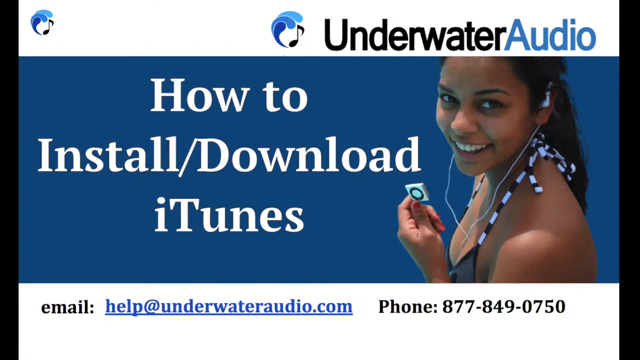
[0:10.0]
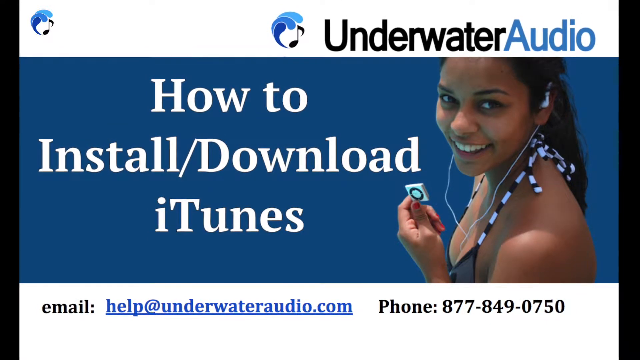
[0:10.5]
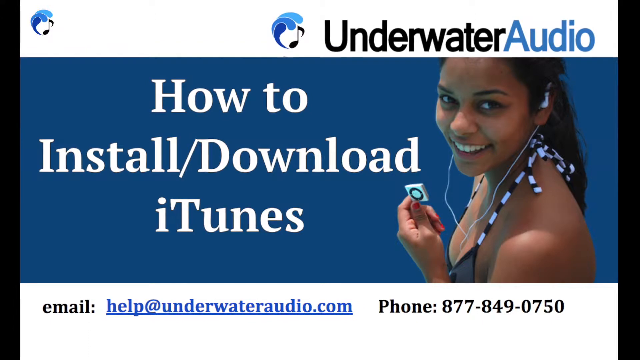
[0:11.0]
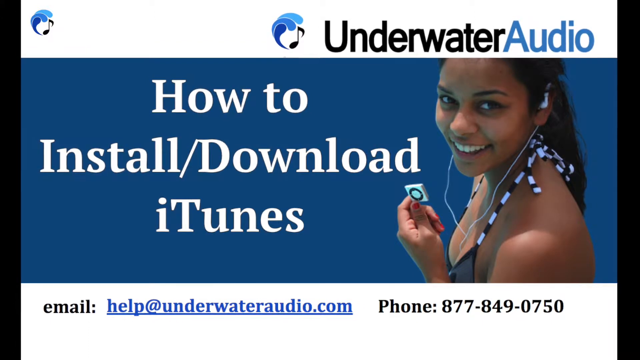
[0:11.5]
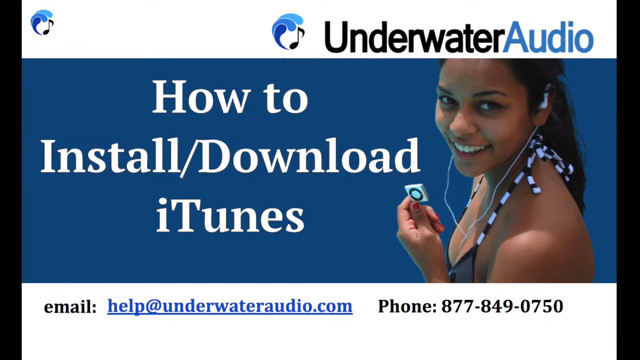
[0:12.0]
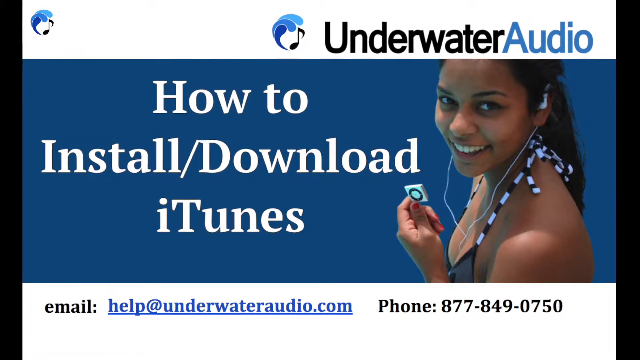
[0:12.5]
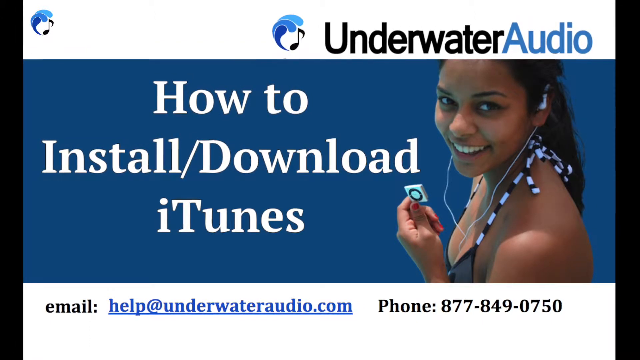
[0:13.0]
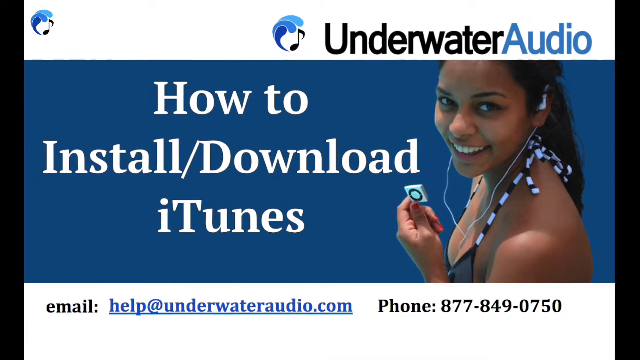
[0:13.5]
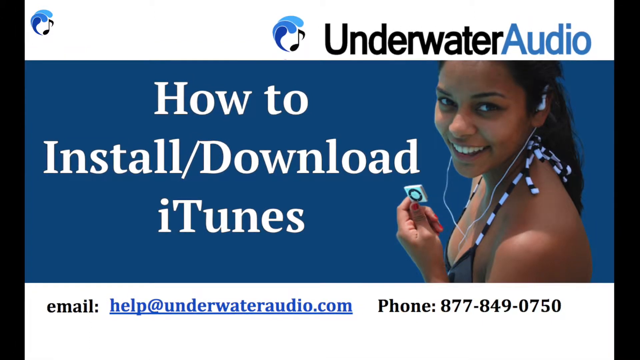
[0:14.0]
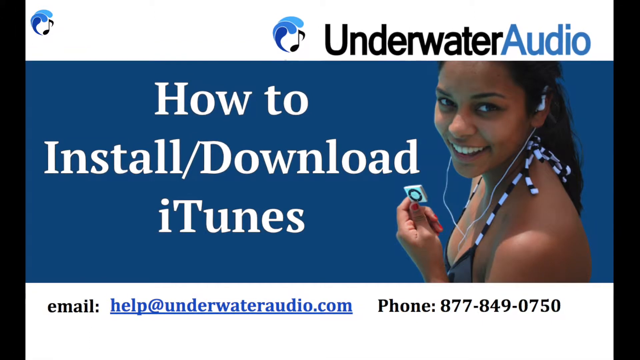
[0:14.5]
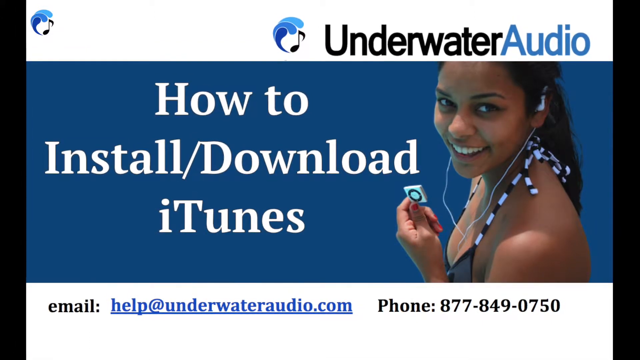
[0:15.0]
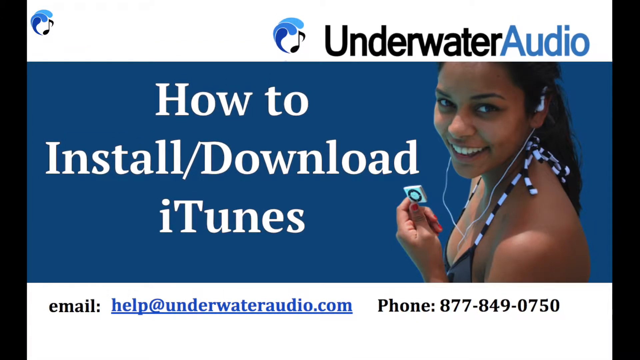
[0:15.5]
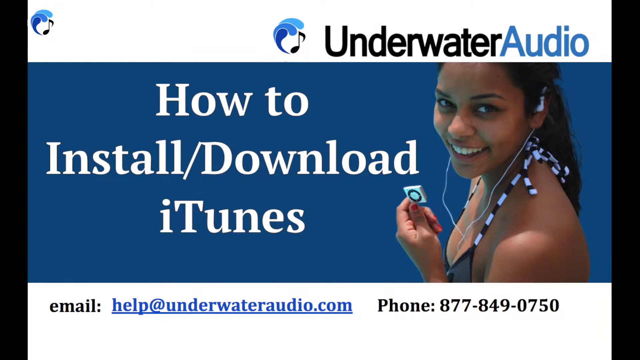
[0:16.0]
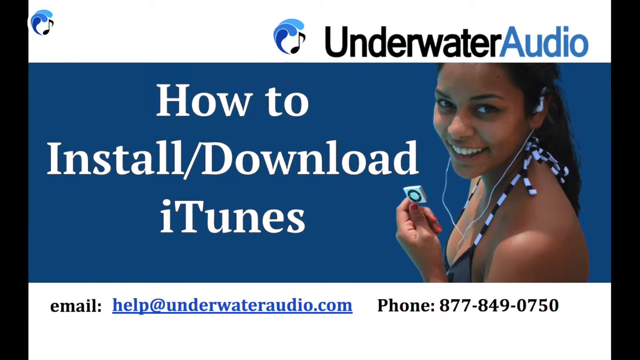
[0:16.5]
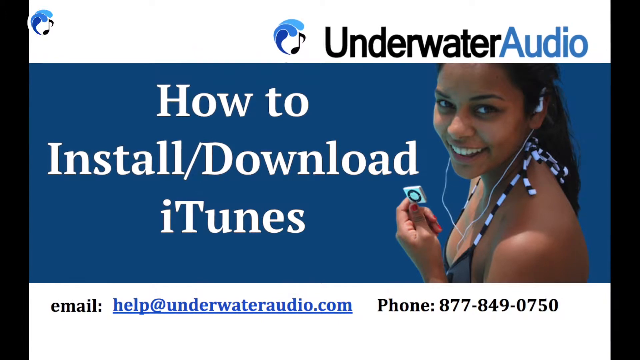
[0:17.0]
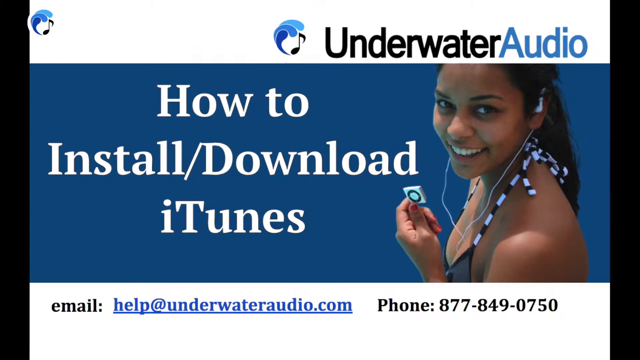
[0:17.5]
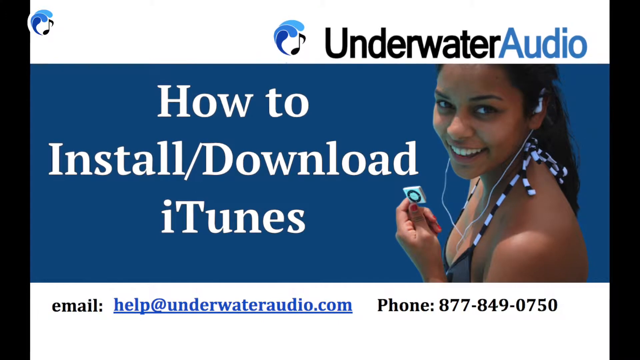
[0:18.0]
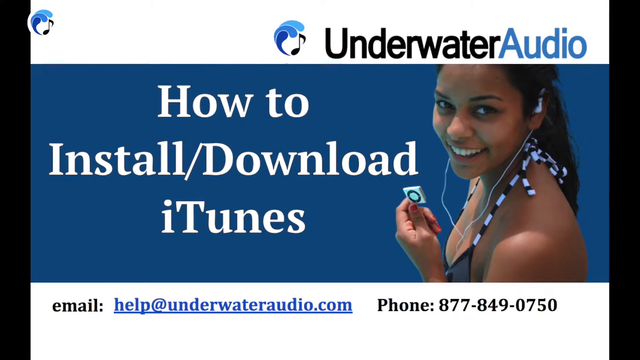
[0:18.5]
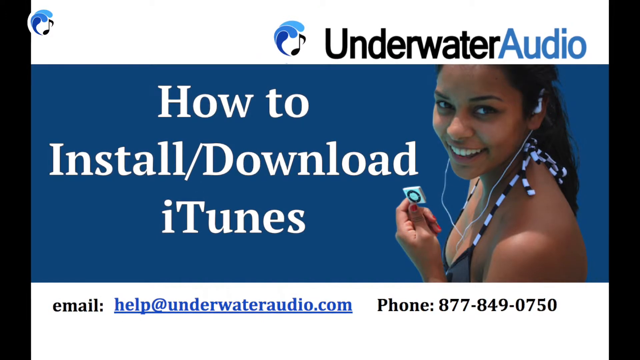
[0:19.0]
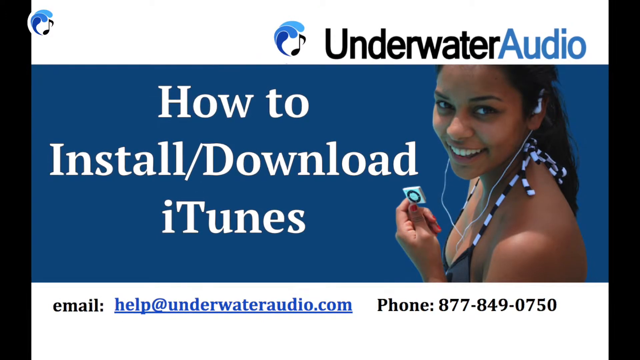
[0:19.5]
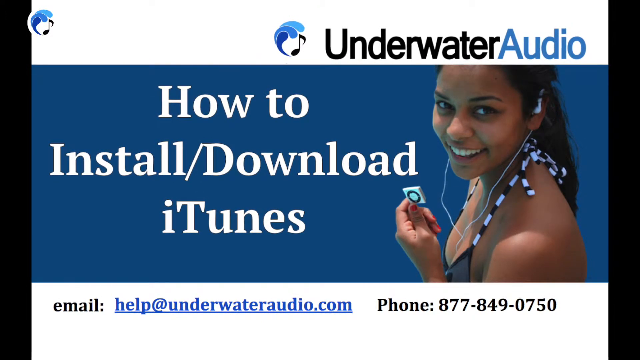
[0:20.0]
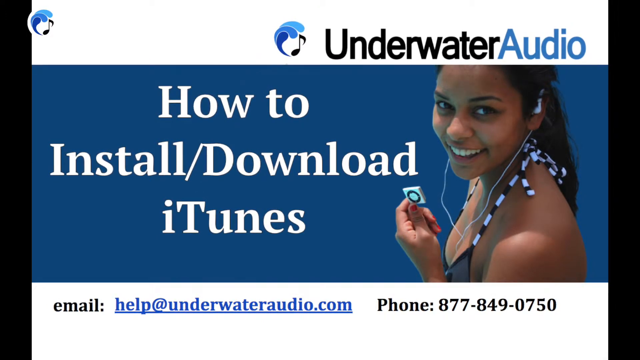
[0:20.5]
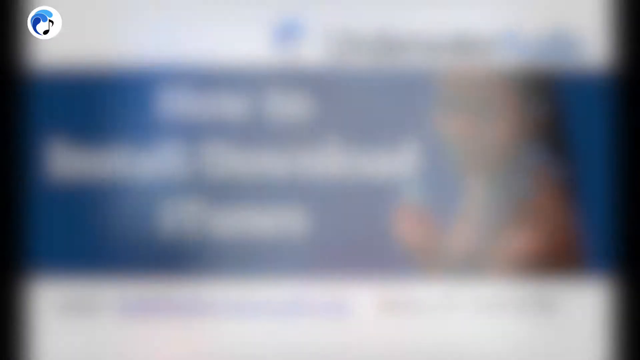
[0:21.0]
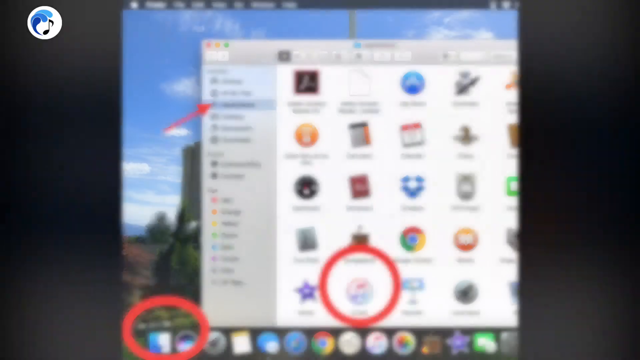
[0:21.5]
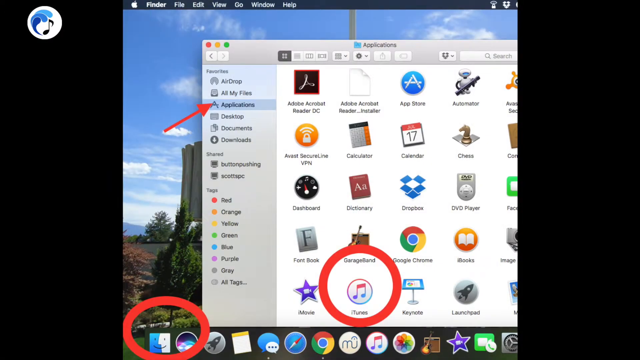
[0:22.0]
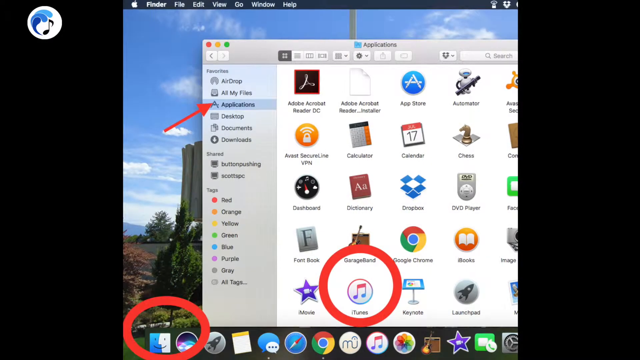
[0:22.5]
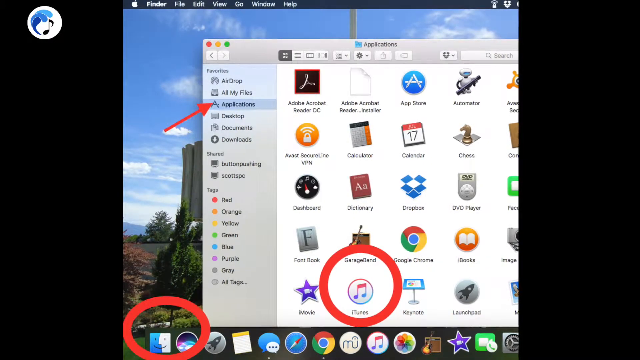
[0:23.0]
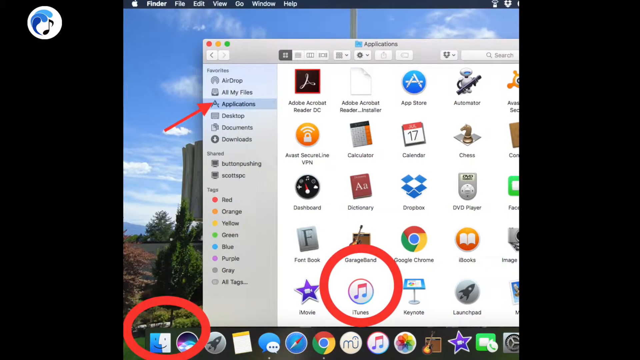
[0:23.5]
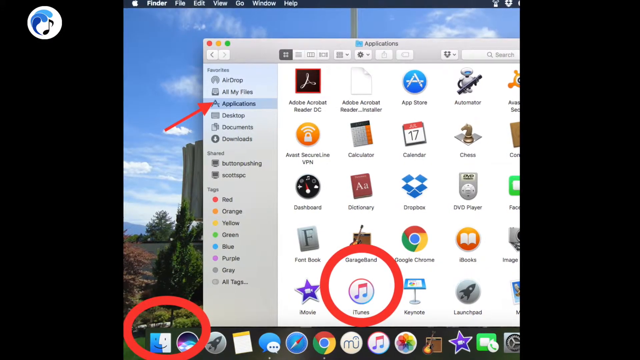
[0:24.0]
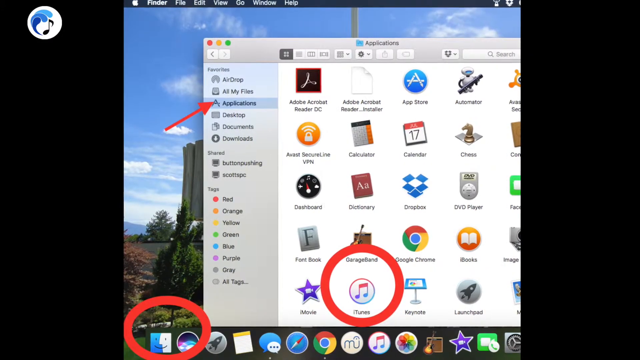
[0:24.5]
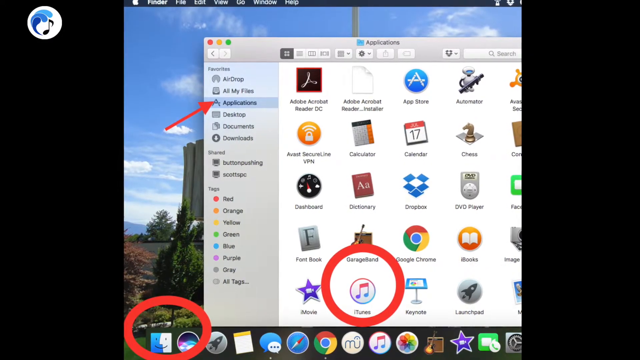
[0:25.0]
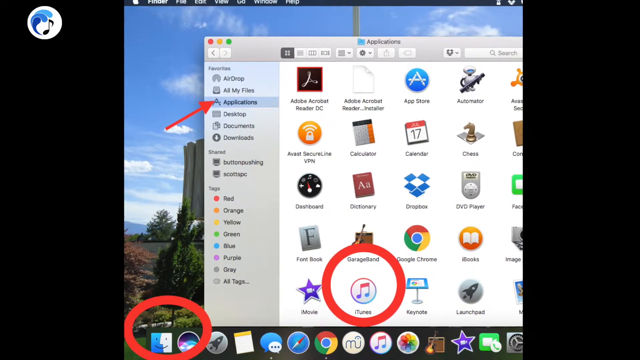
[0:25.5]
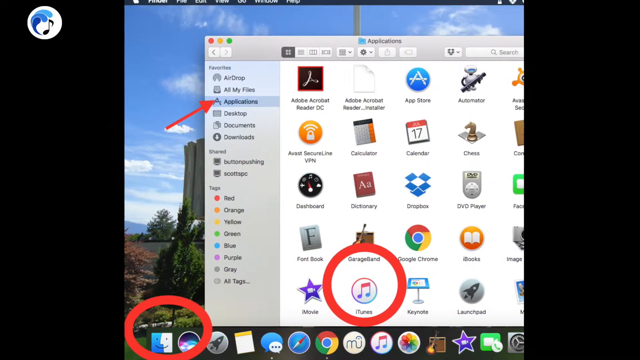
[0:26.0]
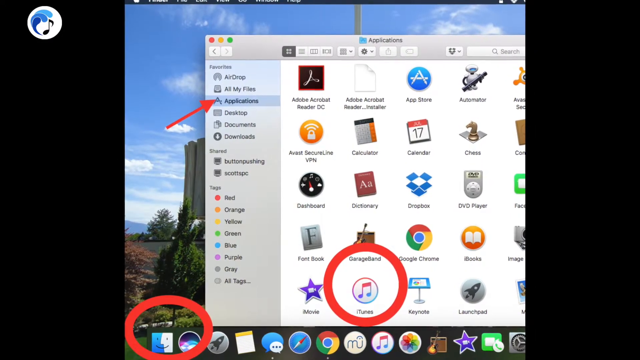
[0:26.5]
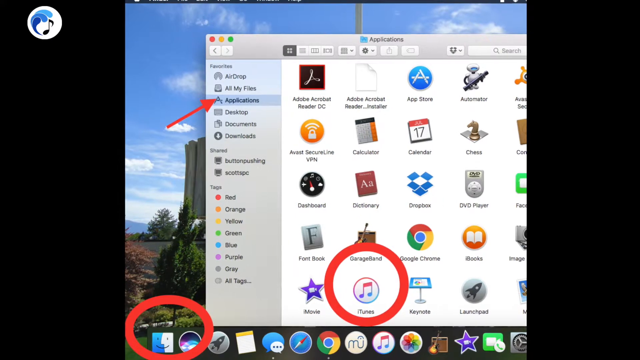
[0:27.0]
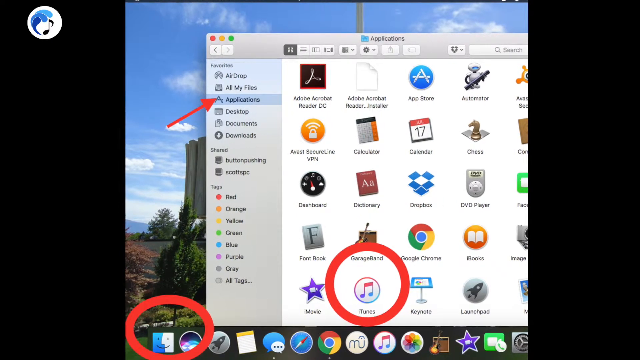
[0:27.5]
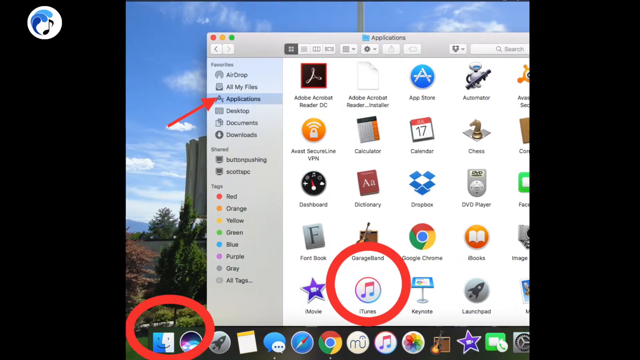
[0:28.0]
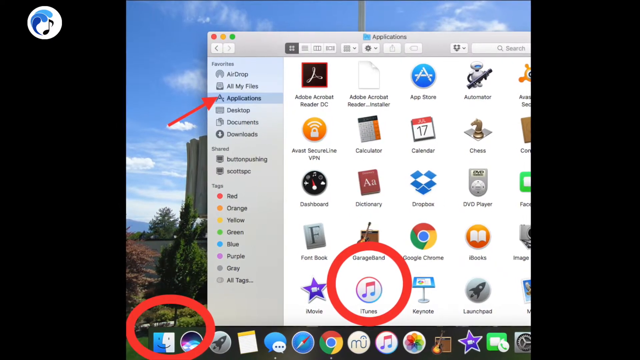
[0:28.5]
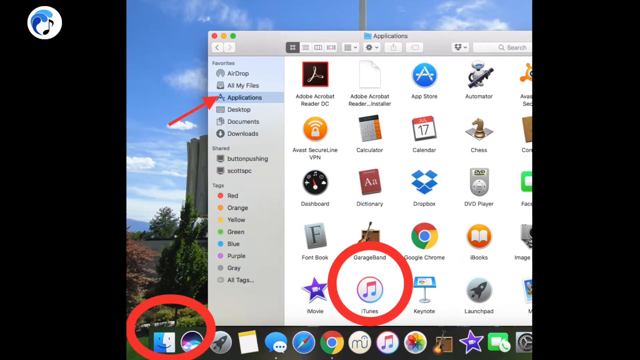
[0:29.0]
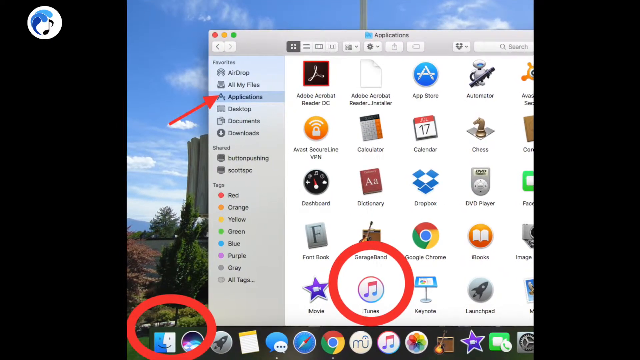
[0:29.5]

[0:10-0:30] The same page remains on screen. The middle part of the screen is blue and shows the woman's face with the headphones; she appears to be wearing a suit with some sort of stripes. On the blue background, white text reads "how to install or download iTunes," with her face and the iPod shuffle she holds to the right of the title, all under "underwater audio." The blue area is framed by a white header and footer. The footer says "email:" in black text, followed in blue, like a hyperlink, by "help@underwateraudio.com," and then "phone 877-849-0750." The screen pauses on this for a while, then switches to the Finder on a Mac with many icons. A red arrow points to Applications, and the iTunes app and the Finder app are circled in red. It seems to be guiding the viewer through the steps.